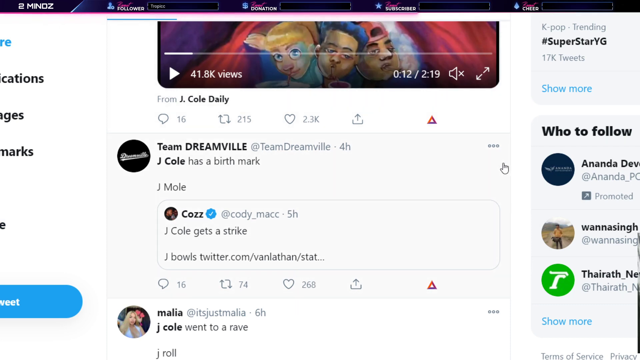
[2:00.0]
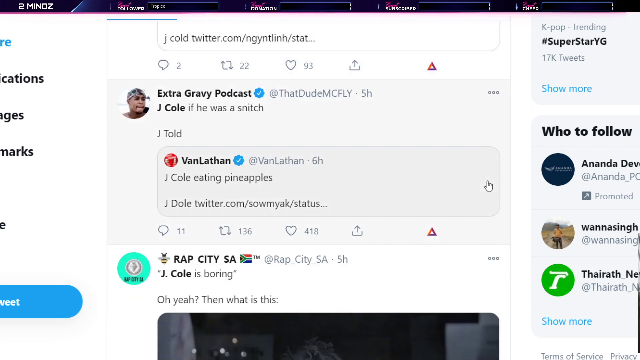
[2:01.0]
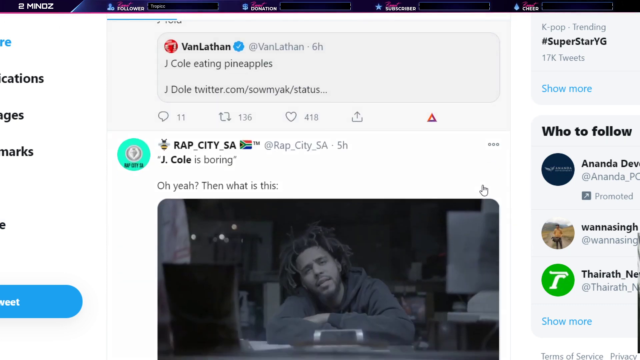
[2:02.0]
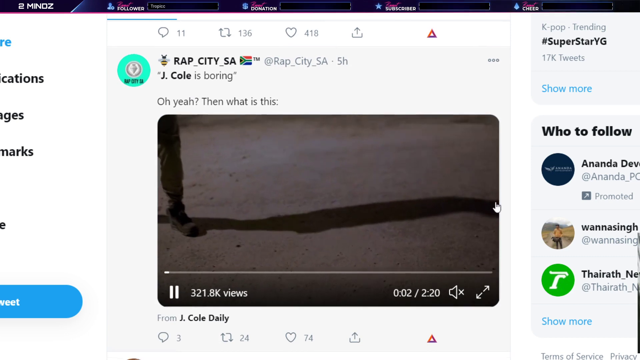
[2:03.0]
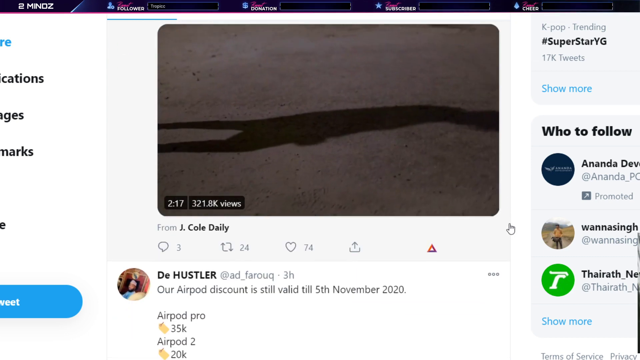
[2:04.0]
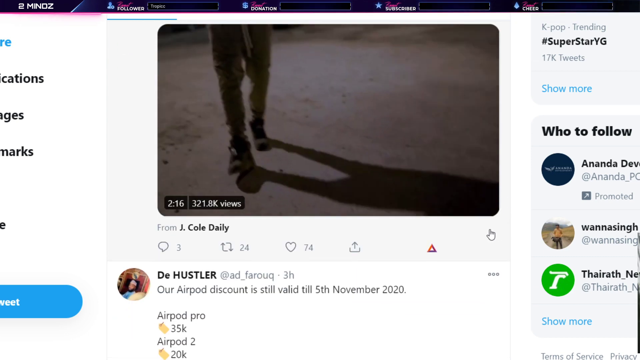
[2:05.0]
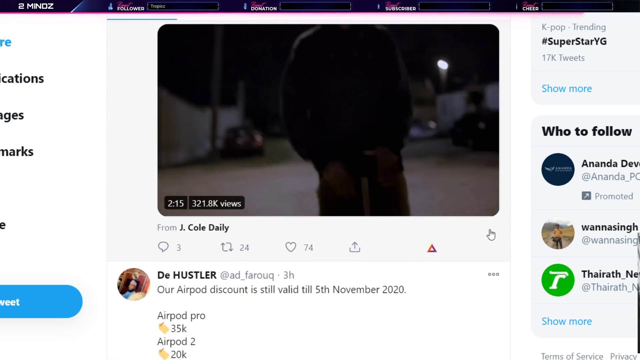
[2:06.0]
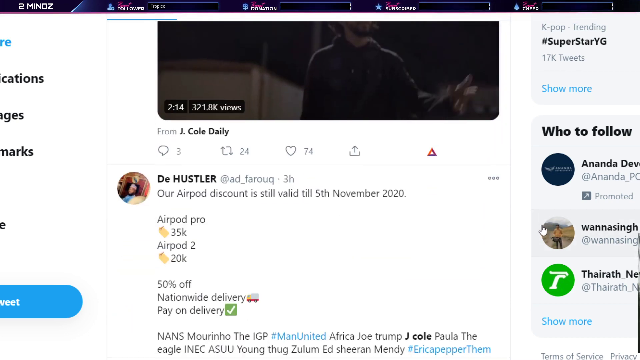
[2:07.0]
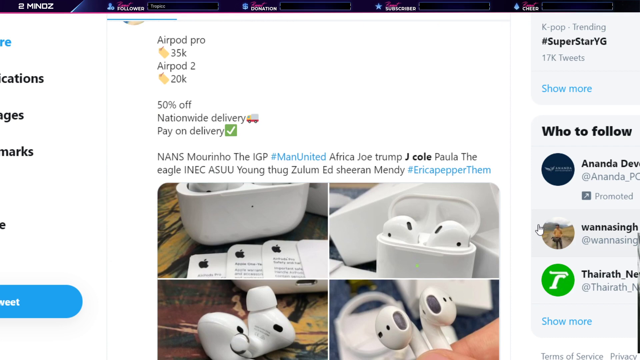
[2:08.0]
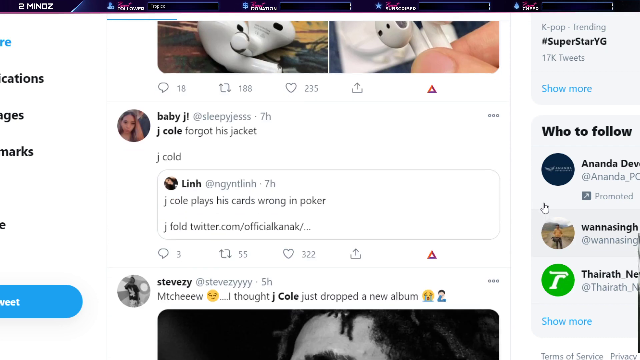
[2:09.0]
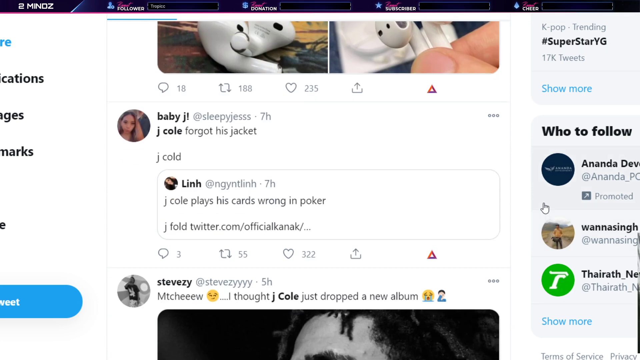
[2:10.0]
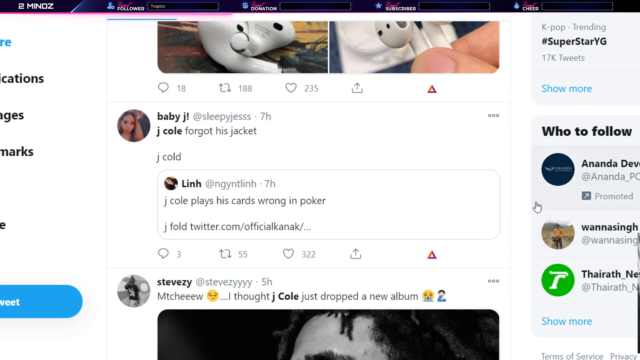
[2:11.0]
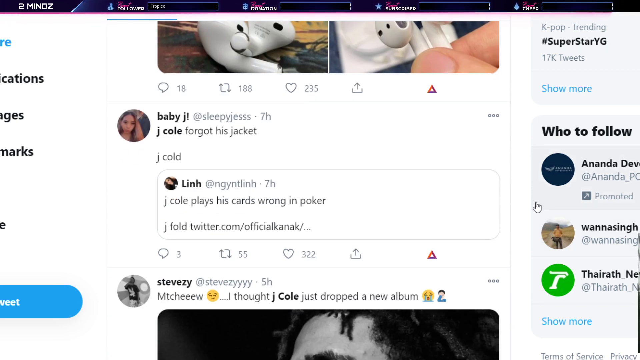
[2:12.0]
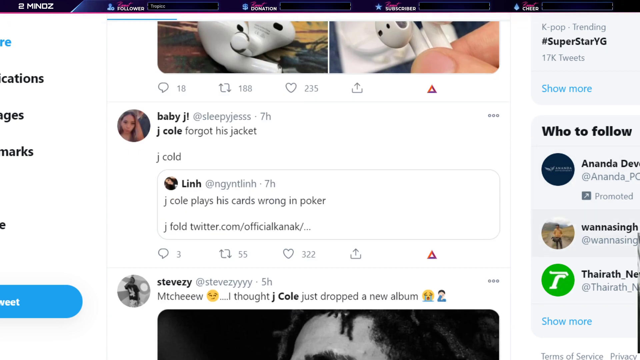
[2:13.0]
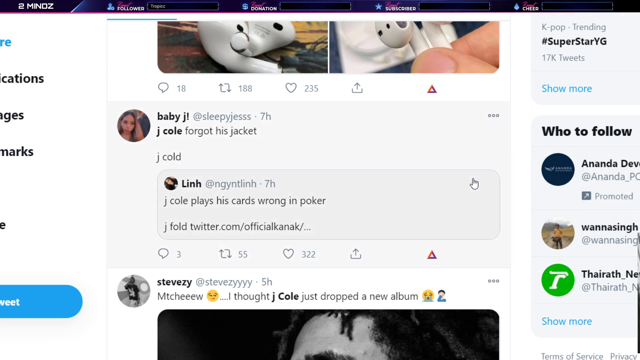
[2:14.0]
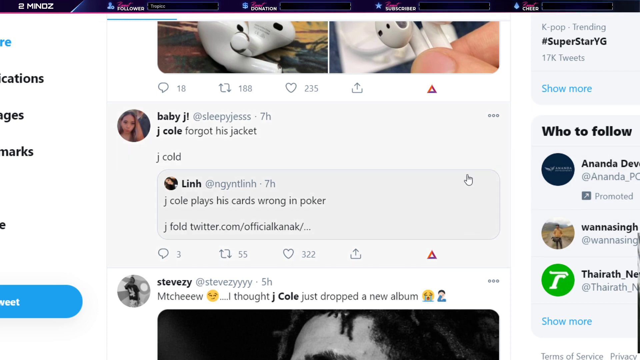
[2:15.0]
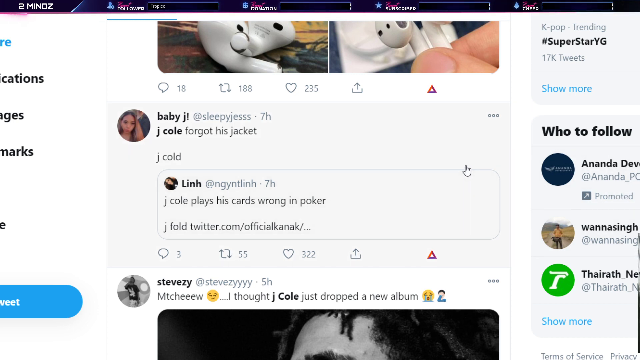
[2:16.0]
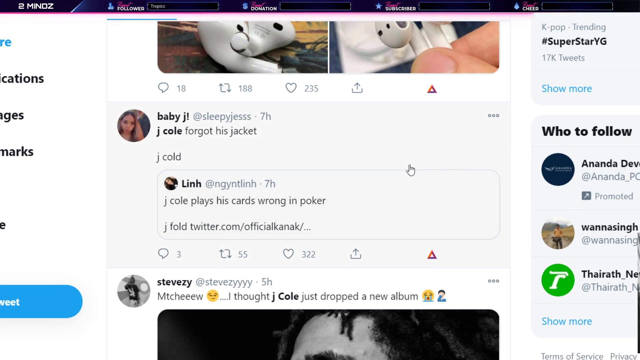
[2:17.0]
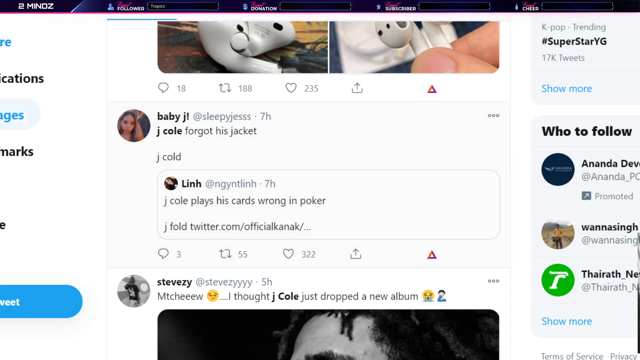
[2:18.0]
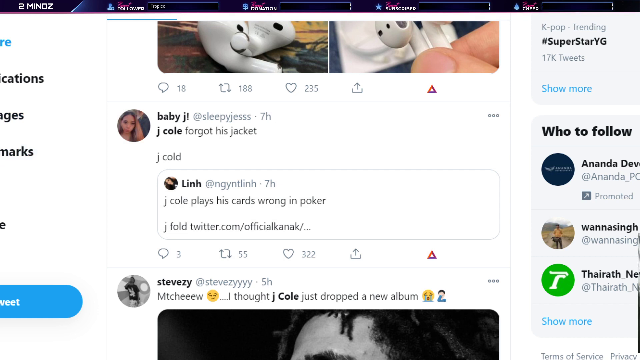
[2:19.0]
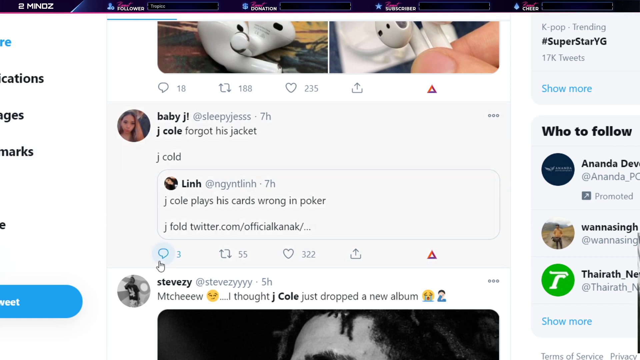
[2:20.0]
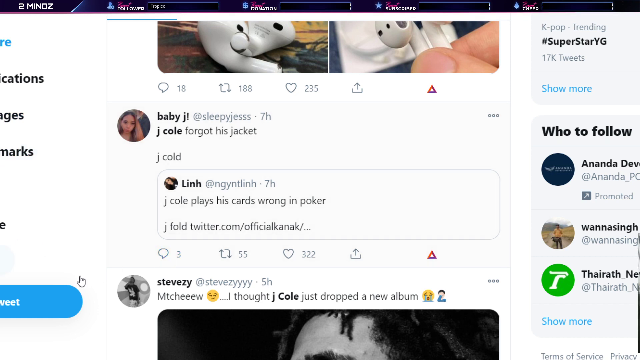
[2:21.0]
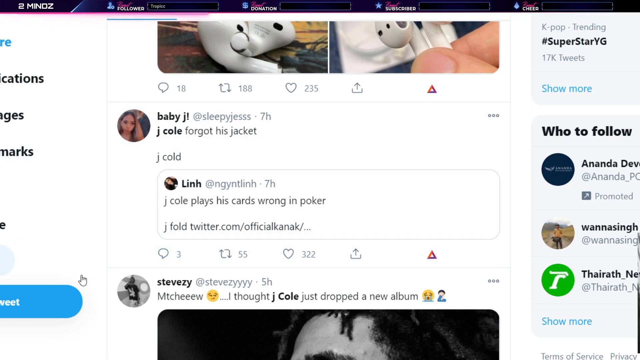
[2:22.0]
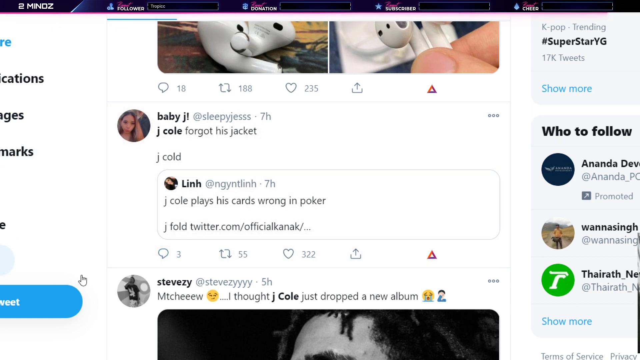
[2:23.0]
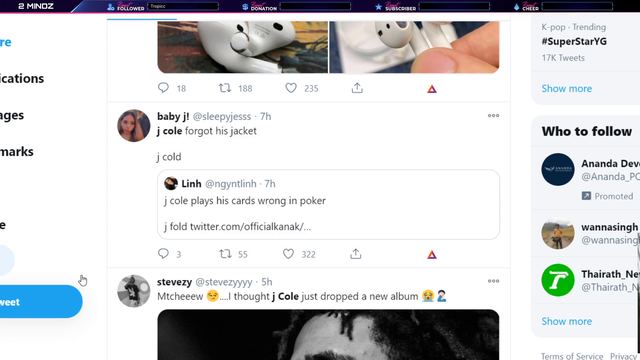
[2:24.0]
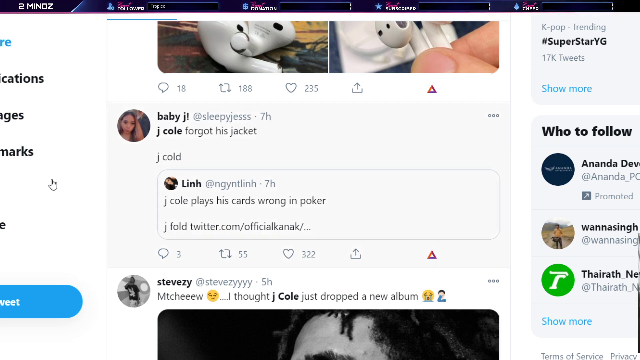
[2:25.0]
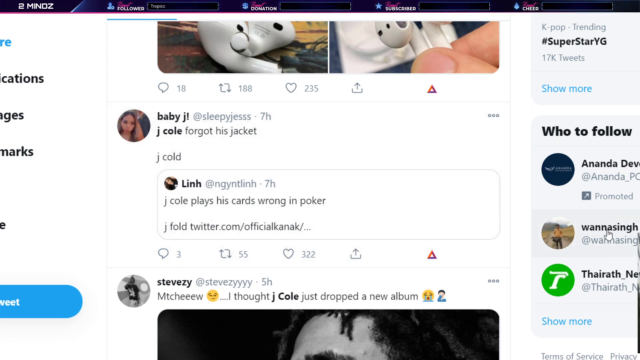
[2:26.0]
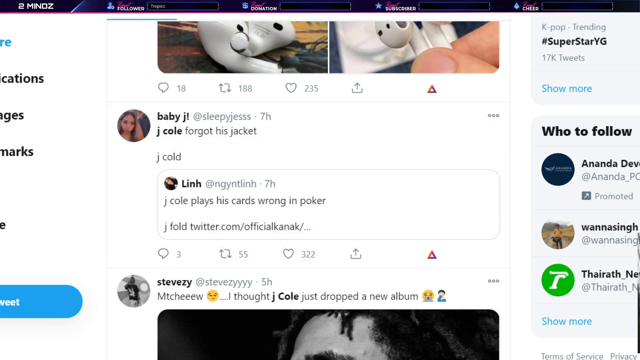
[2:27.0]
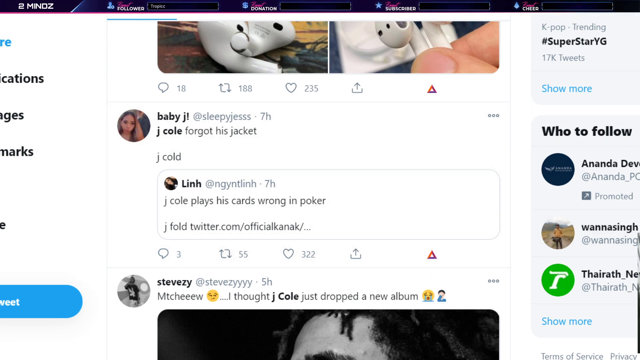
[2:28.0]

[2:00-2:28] The person scrolls down and more posts about J. Cole appear. A tweet from RapCitySA with a South African flag, posted 5 hours ago, says "J.Cole is boring. Oh yeah? Then what is this?" with a video of J. Cole singing. The video is muted, lasts 2 minutes and 20 seconds, and has 321,000 views; it shows J. Cole moving around, singing and using his hands. The post has 74 likes, 24 retweets and 3 comments, and the video is from J. Cole Day. Another post is from a seller promoting AirPods Pro for $35K and AirPods 2 for $20K, saying 50% off, nationwide delivery, pay on delivery, and J. Cole is quoted in this tweet. The user scrolls down through more and more posts about J. Cole, navigating around the Twitter page.